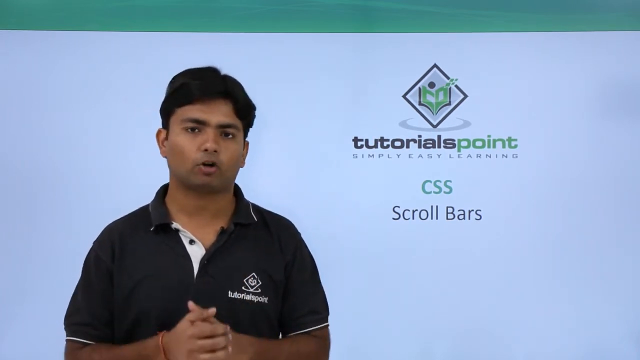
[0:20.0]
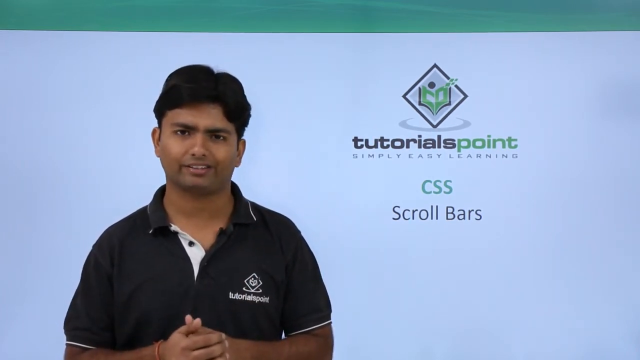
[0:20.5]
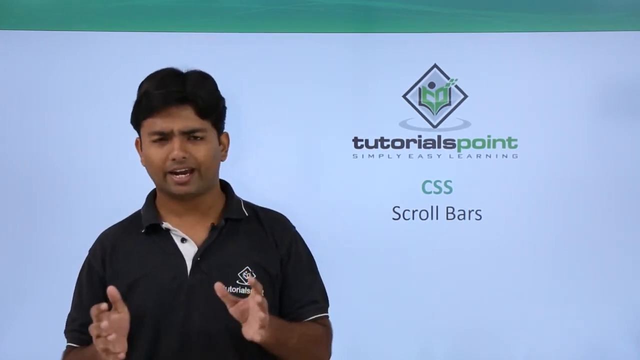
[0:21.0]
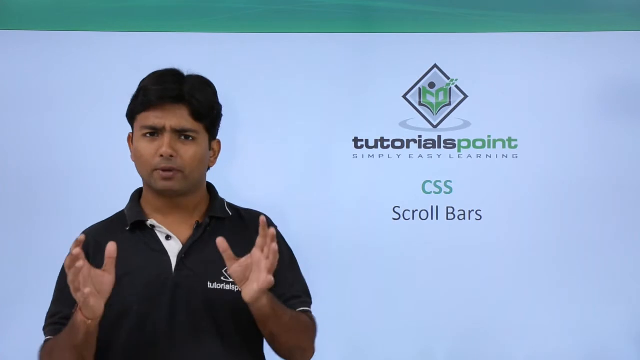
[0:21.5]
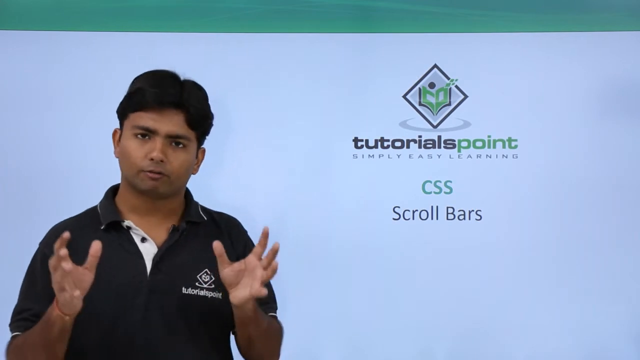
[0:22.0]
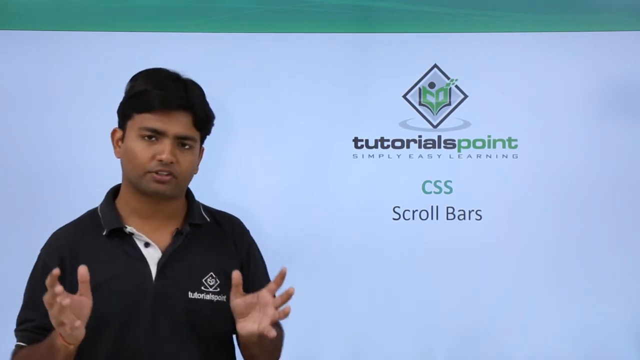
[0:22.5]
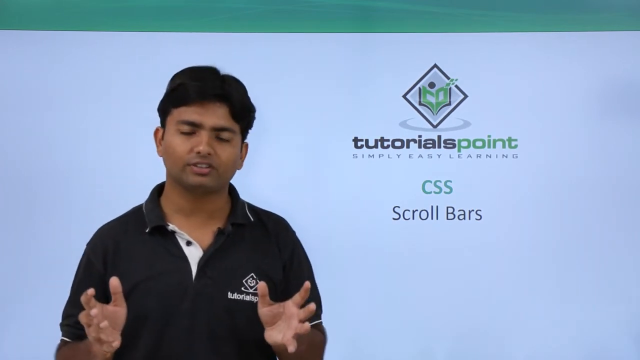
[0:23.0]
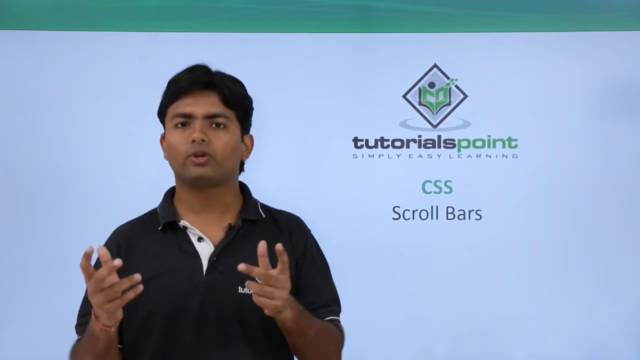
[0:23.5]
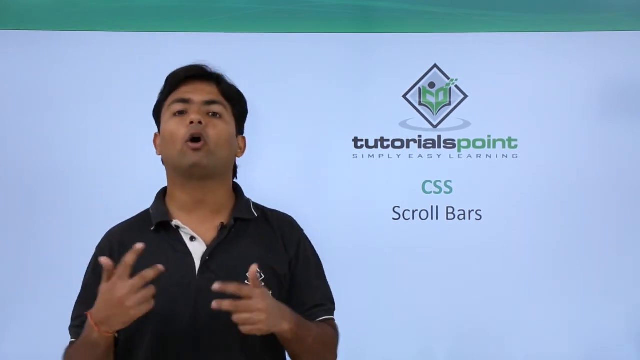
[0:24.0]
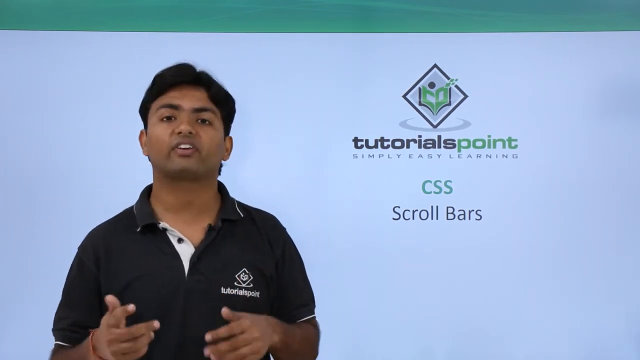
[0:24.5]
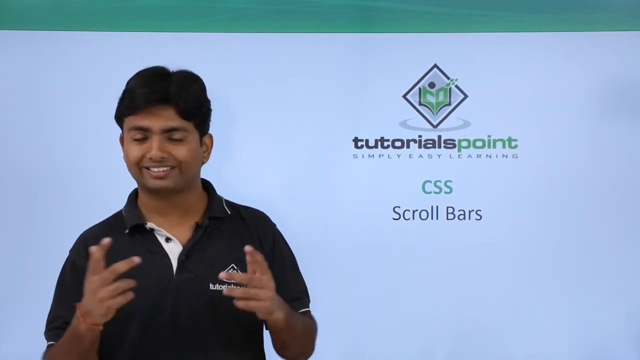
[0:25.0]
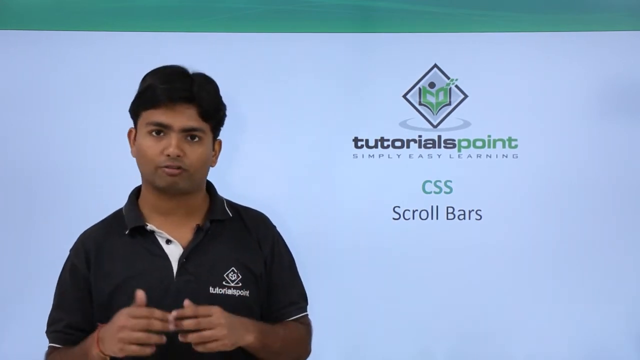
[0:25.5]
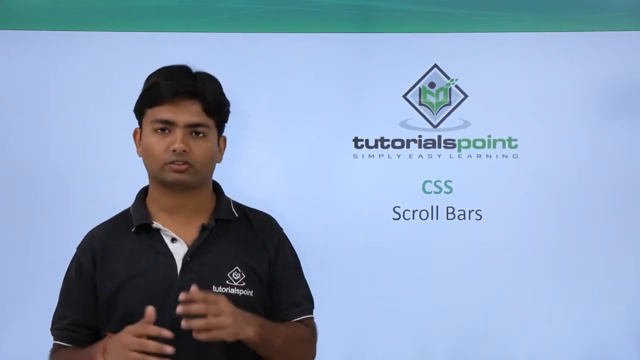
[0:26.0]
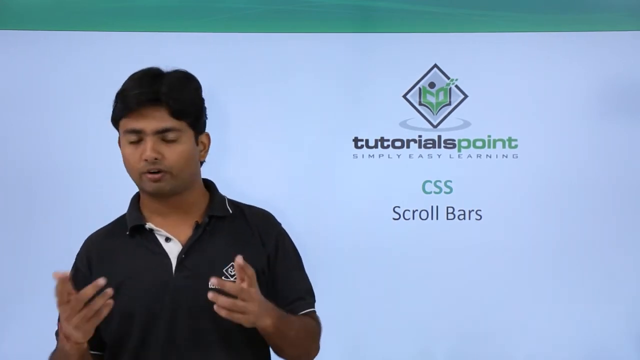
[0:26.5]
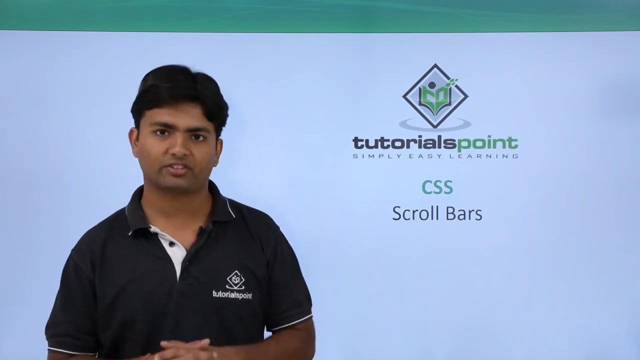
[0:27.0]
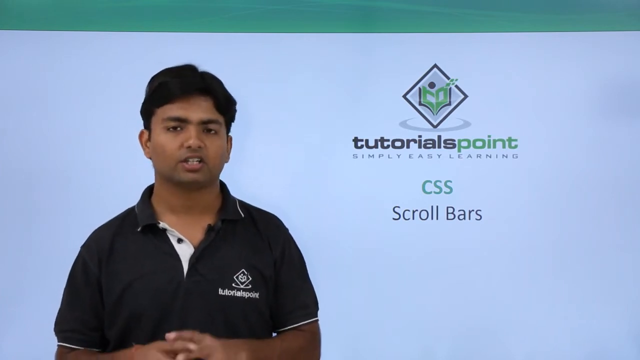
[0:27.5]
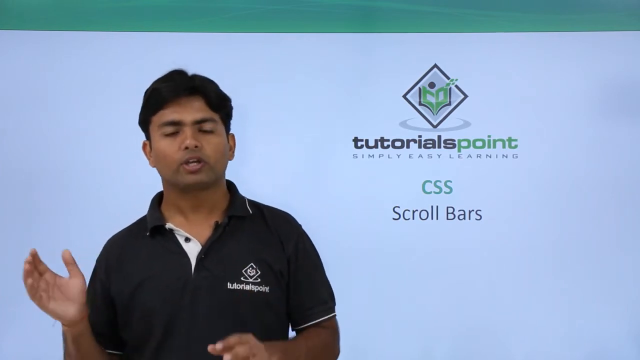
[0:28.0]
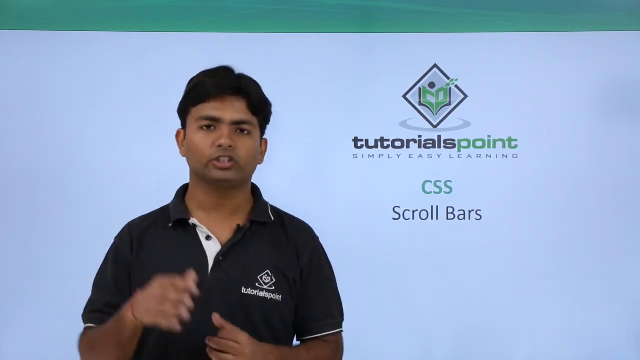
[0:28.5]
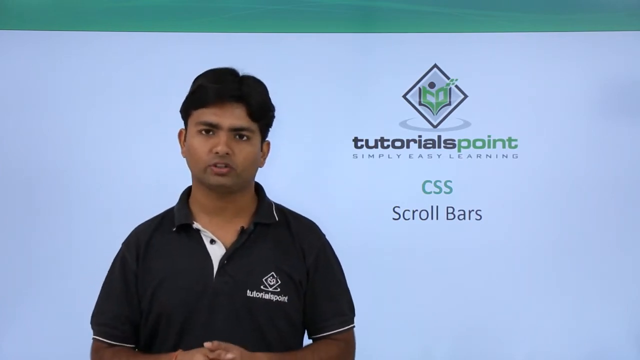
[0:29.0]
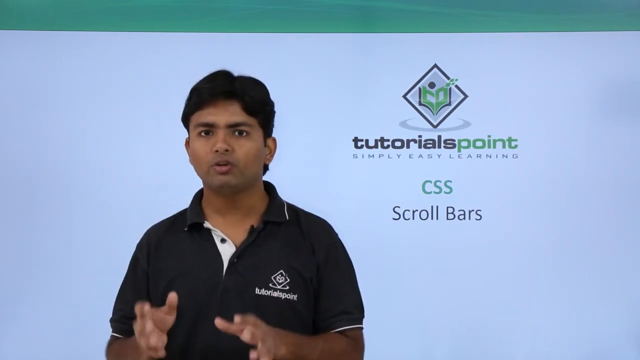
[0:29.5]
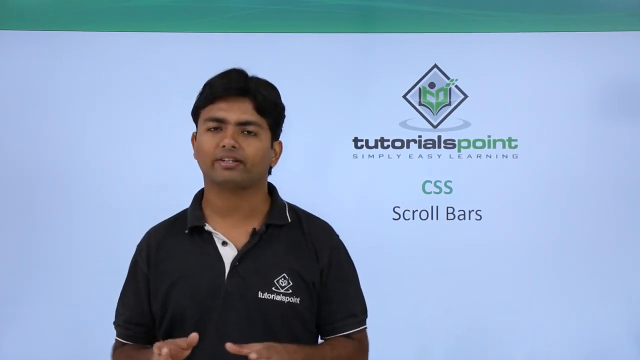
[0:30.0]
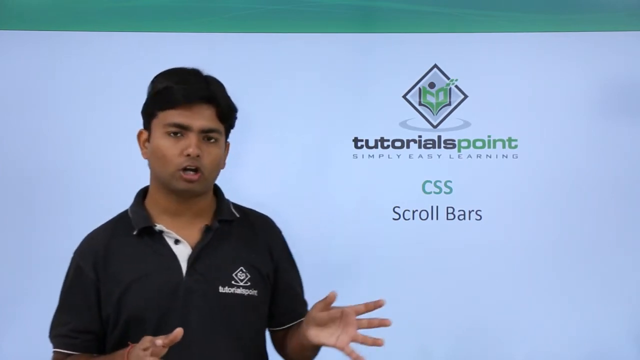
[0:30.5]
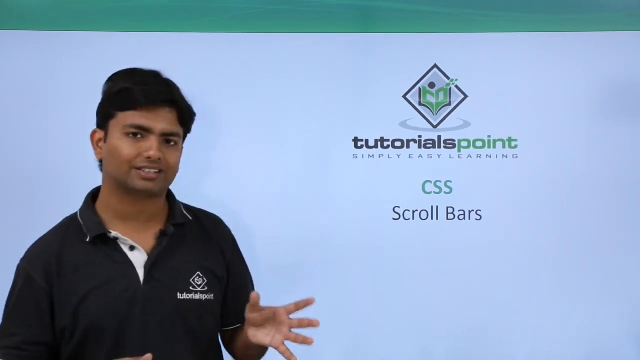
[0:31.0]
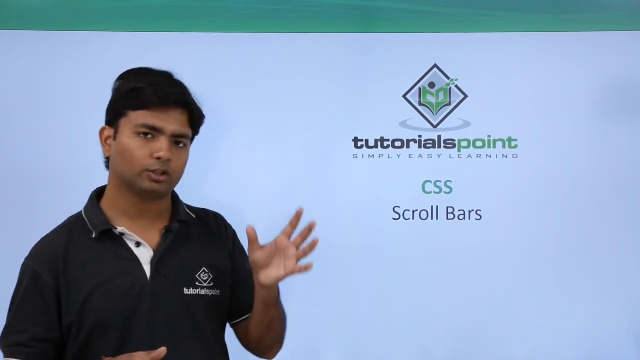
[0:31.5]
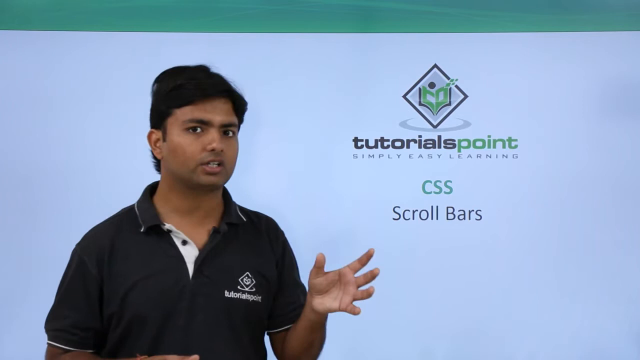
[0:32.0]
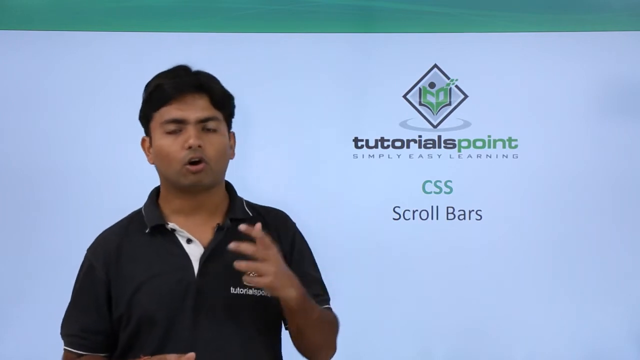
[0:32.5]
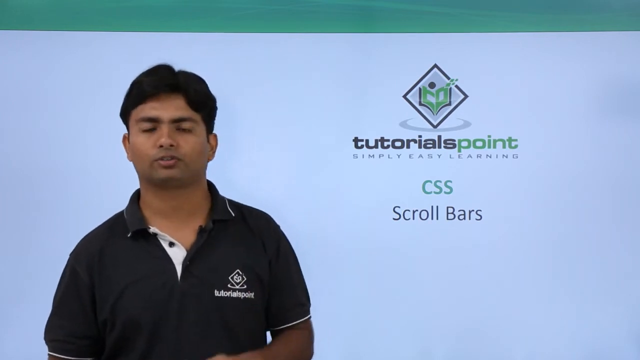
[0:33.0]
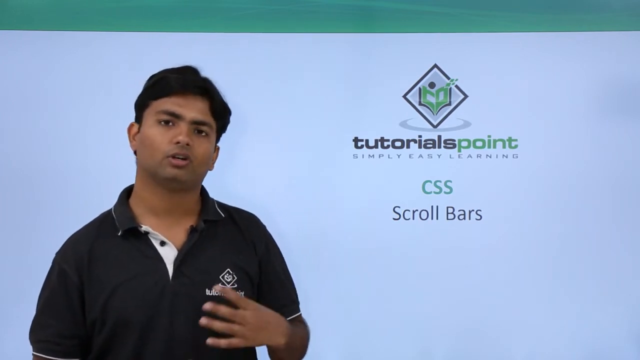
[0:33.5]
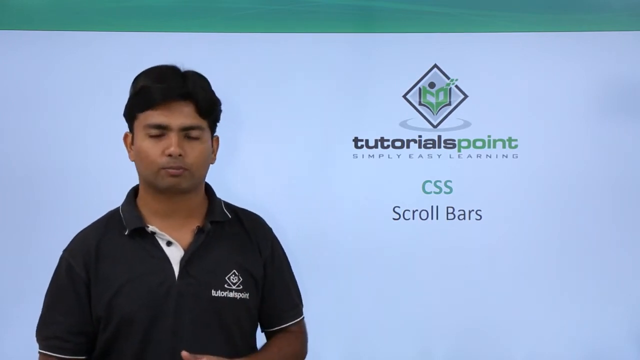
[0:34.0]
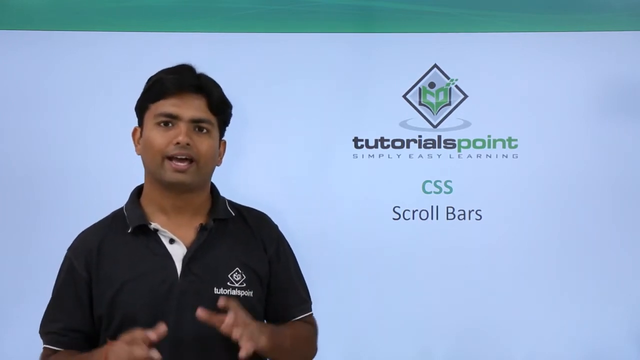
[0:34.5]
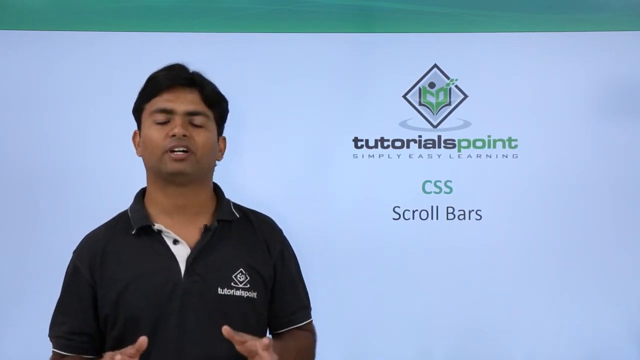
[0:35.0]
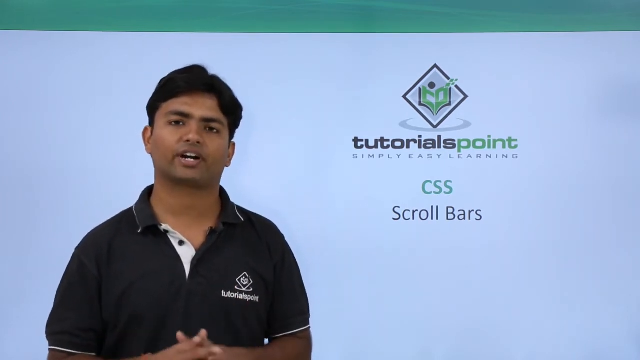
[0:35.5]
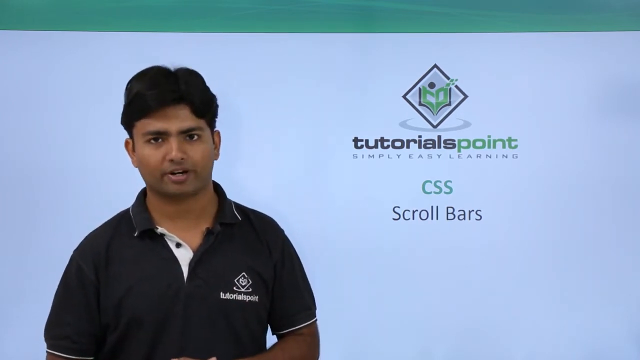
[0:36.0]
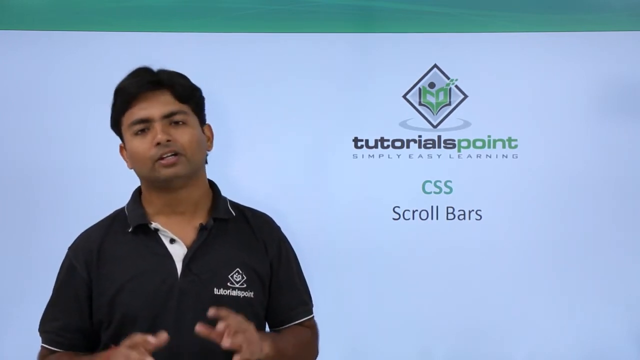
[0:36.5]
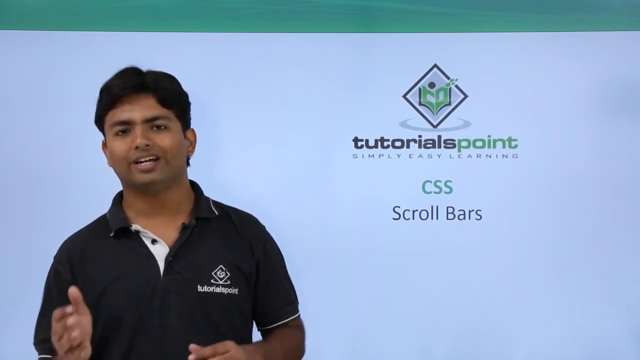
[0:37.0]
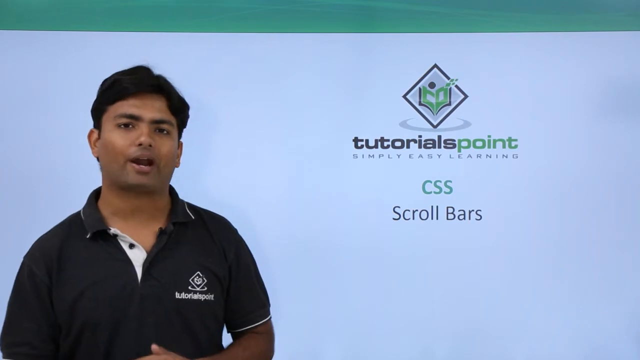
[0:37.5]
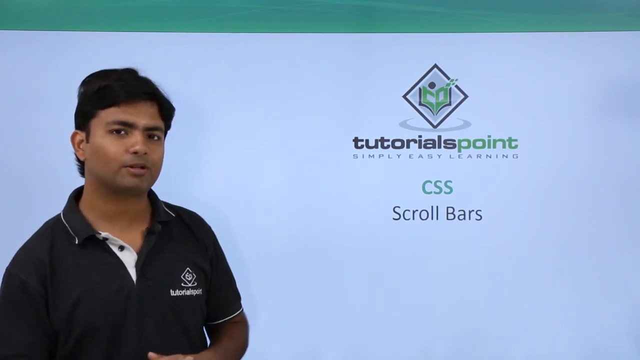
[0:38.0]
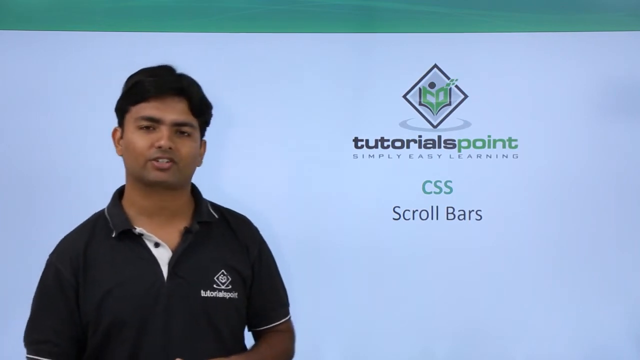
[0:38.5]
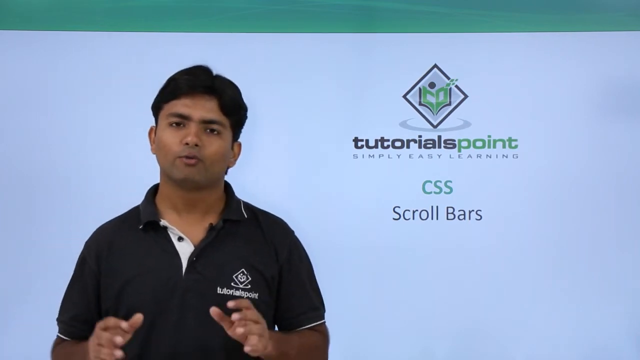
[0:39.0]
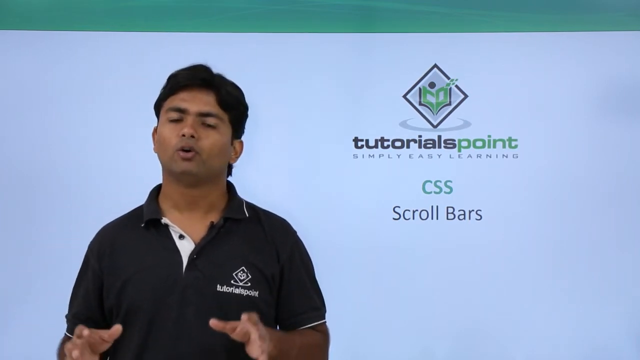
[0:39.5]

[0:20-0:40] The young man in the black short-sleeved polo shirt is seen from the chest up. He looks to be of Indian descent and has short black hair. The TutorialsPoint logo is on the left side of his shirt. On the right side of the screen, on the white background behind him, is the TutorialsPoint logo: a gray diamond with a green book inside and a black circle behind the book that looks like a person reading the book. Underneath it says "tutorialspoint", with "tutorials" in black letters and "point" in green letters. Below that, in small black letters, it says "simply easy learning". Under that, in green text, it says "CSS", and beneath that, in black text, "scrollbars". The man speaks to the camera with his hands clasped in front of him, just below his chest. He kind of scrunches his eyebrows together slightly as he speaks, then puts his hands out to the side and moves them around as he talks.